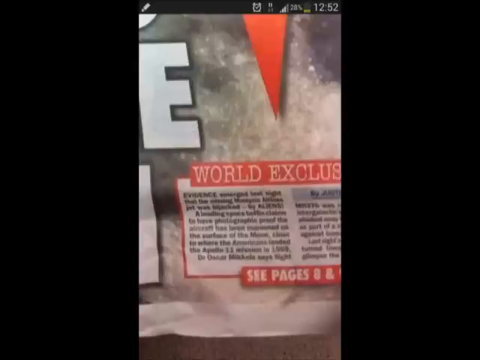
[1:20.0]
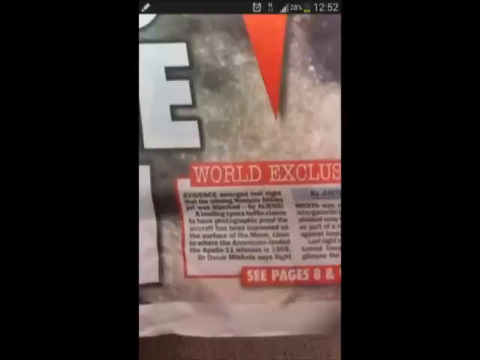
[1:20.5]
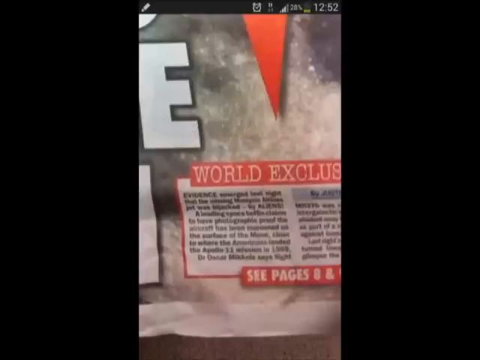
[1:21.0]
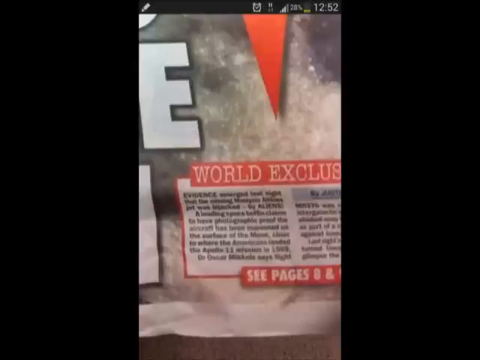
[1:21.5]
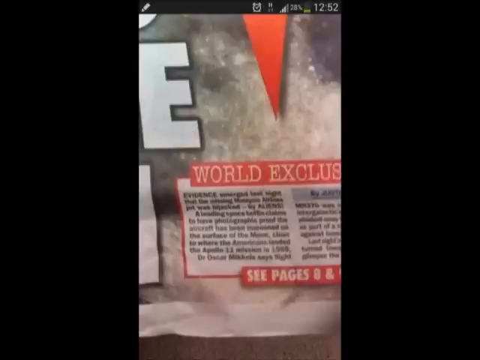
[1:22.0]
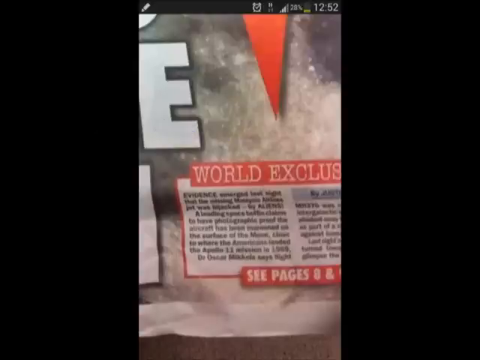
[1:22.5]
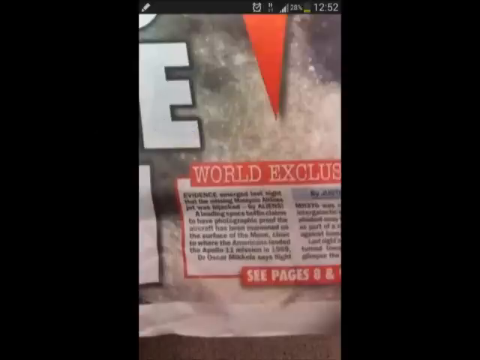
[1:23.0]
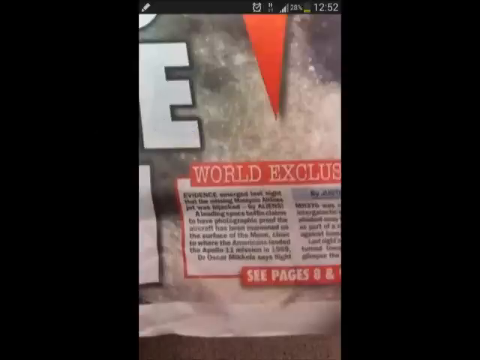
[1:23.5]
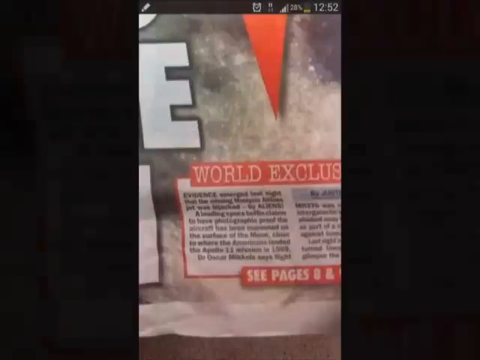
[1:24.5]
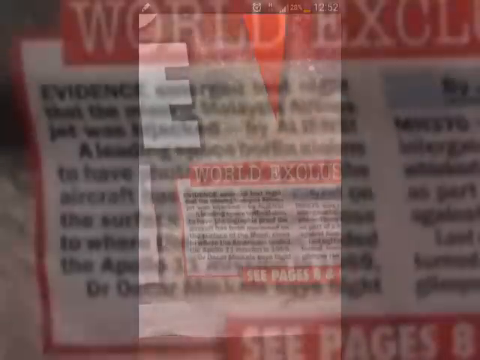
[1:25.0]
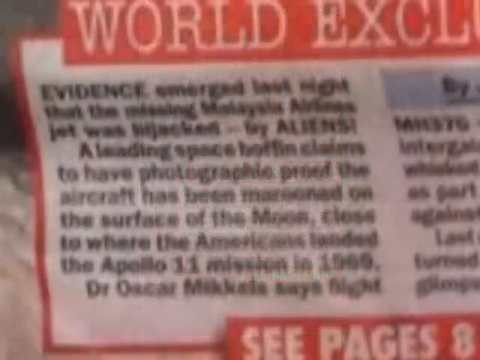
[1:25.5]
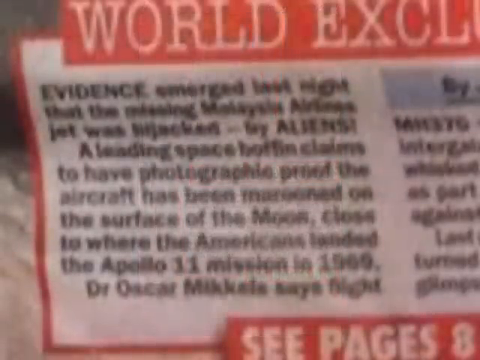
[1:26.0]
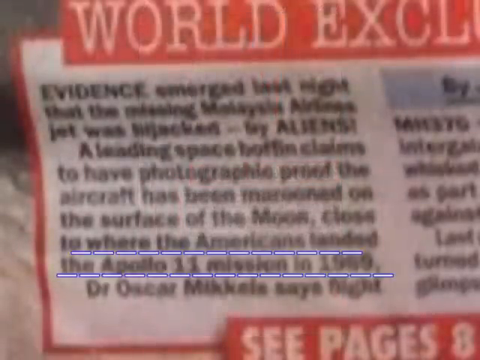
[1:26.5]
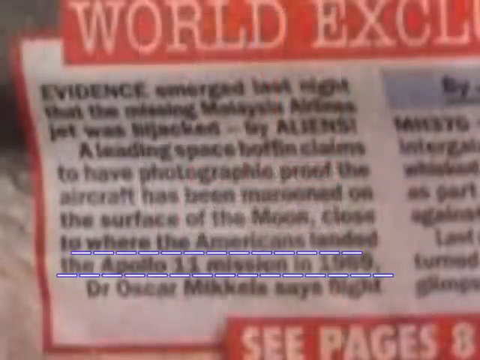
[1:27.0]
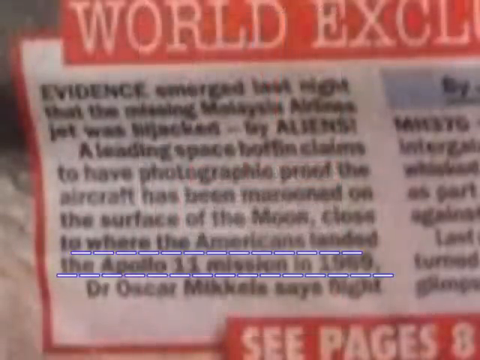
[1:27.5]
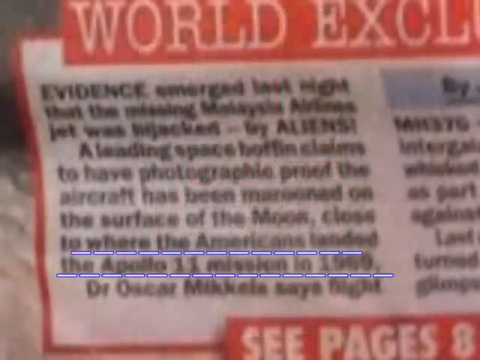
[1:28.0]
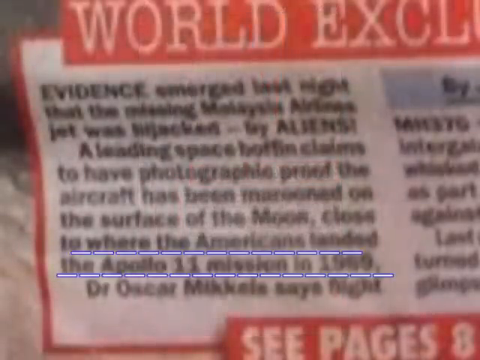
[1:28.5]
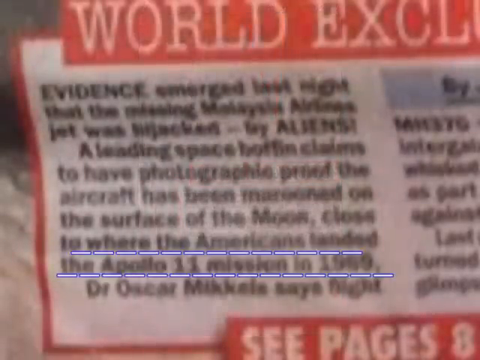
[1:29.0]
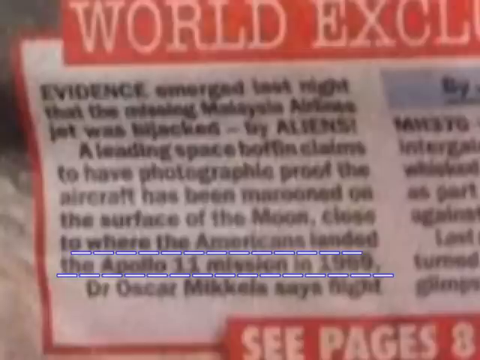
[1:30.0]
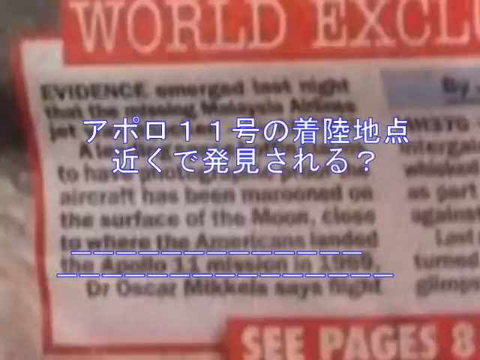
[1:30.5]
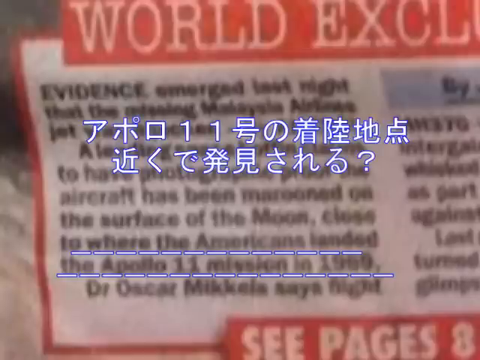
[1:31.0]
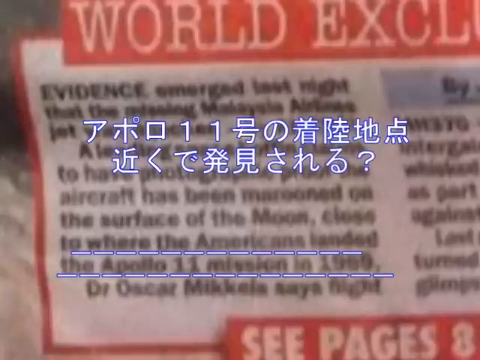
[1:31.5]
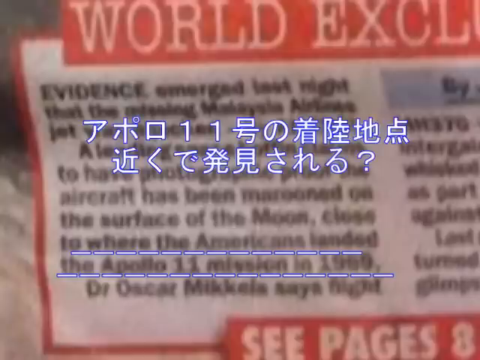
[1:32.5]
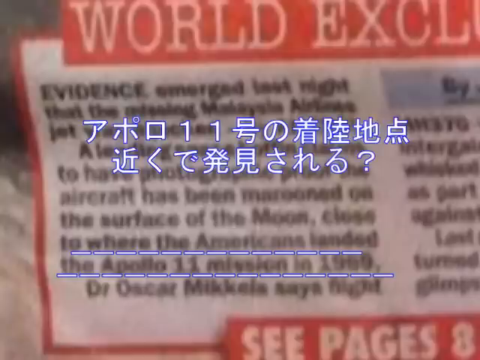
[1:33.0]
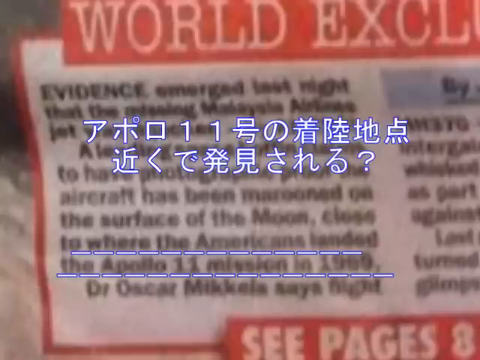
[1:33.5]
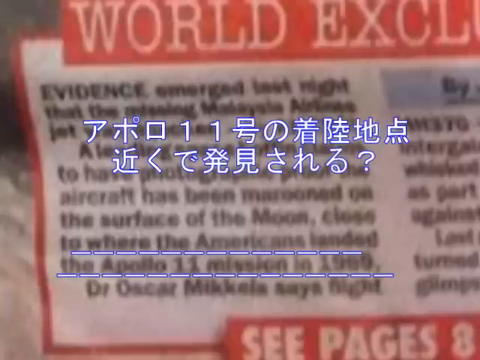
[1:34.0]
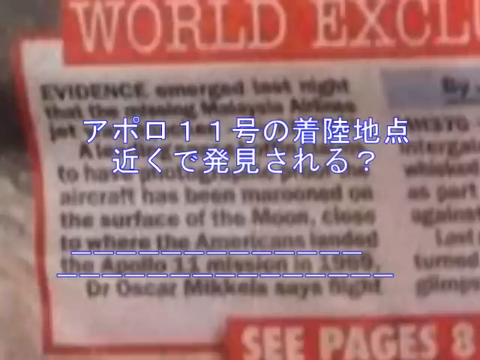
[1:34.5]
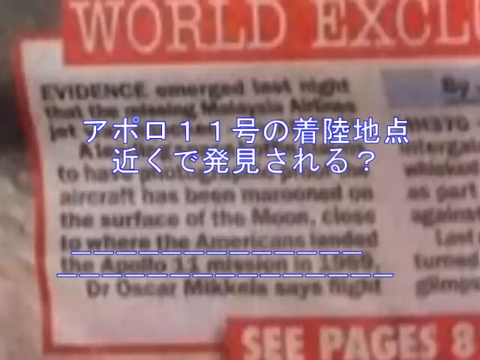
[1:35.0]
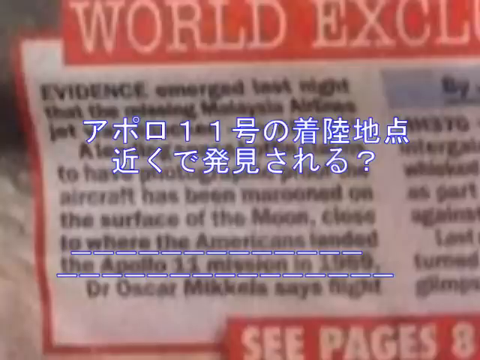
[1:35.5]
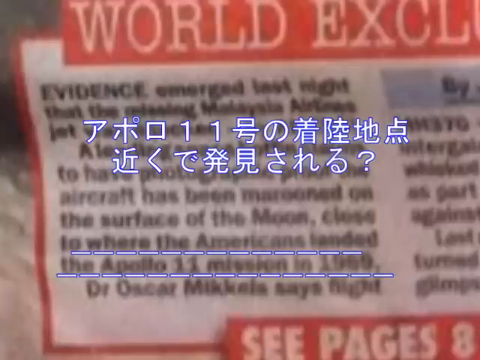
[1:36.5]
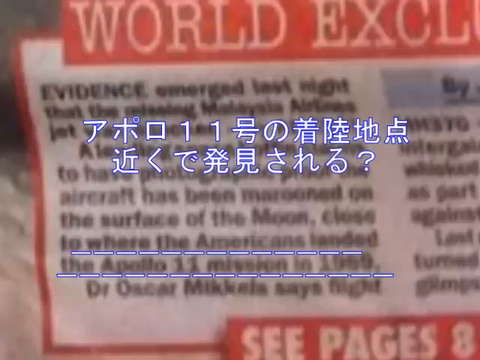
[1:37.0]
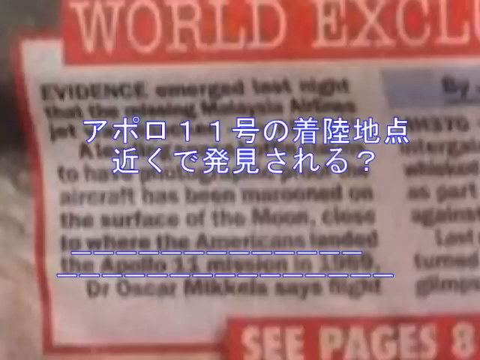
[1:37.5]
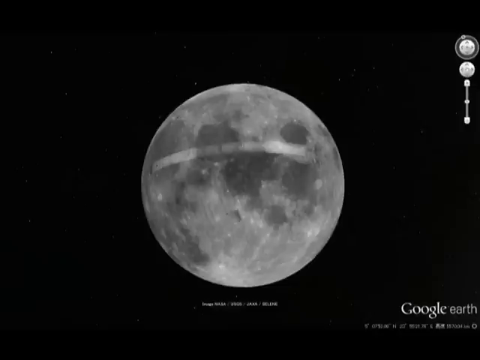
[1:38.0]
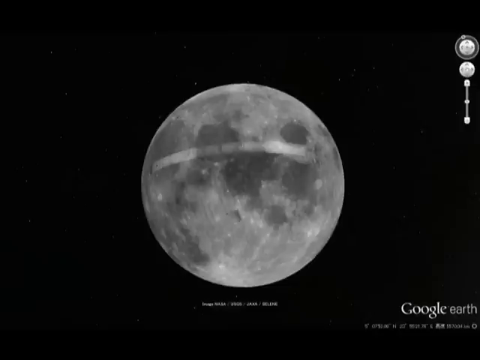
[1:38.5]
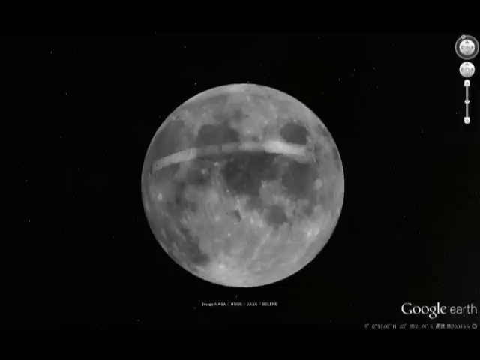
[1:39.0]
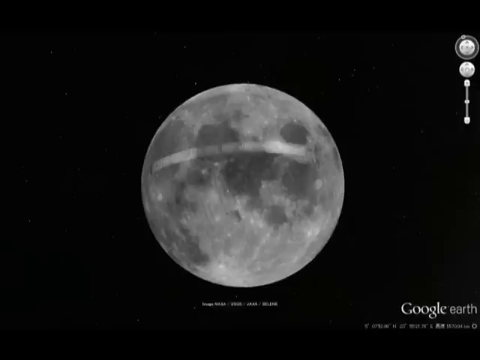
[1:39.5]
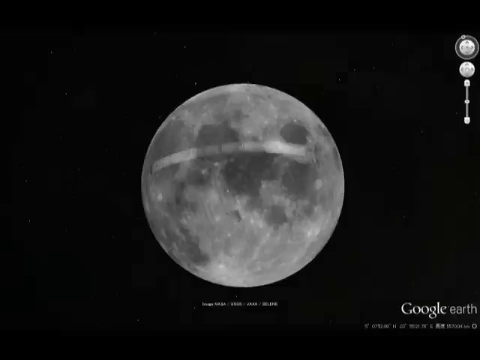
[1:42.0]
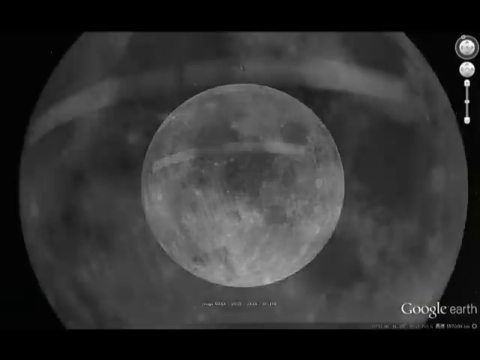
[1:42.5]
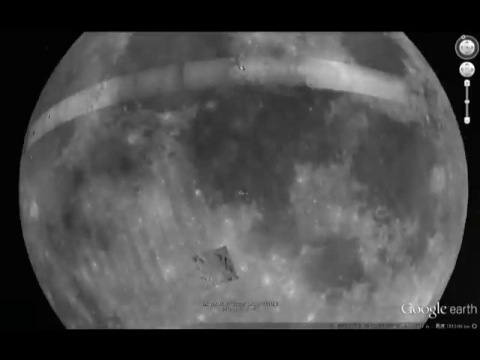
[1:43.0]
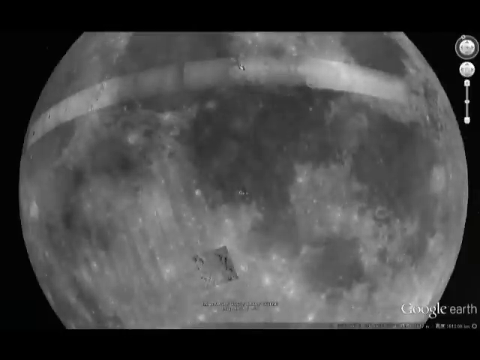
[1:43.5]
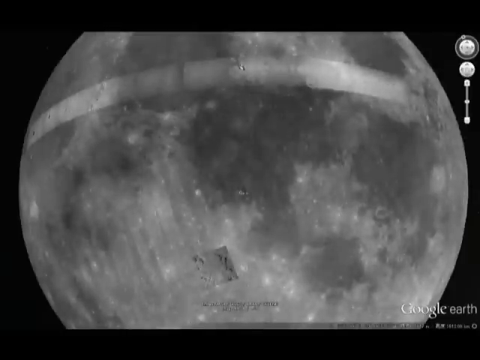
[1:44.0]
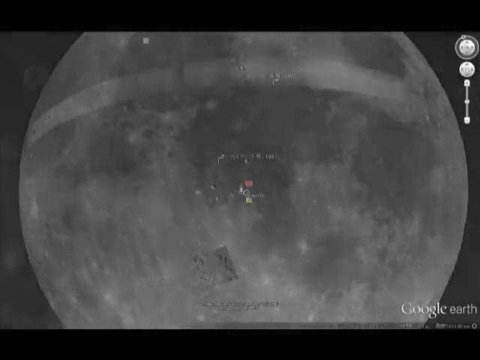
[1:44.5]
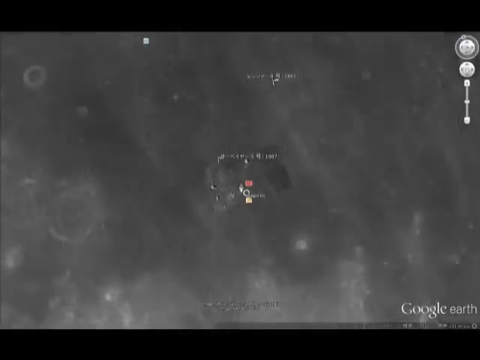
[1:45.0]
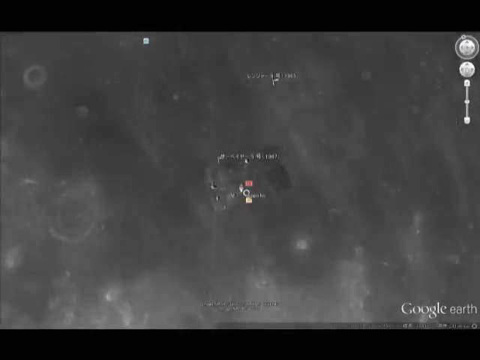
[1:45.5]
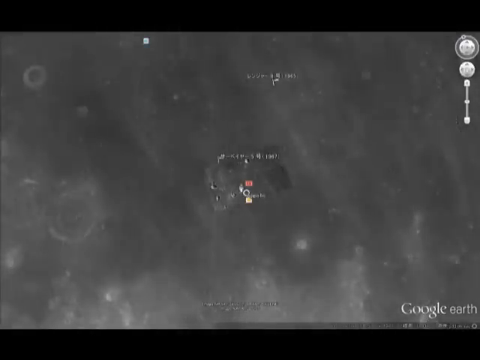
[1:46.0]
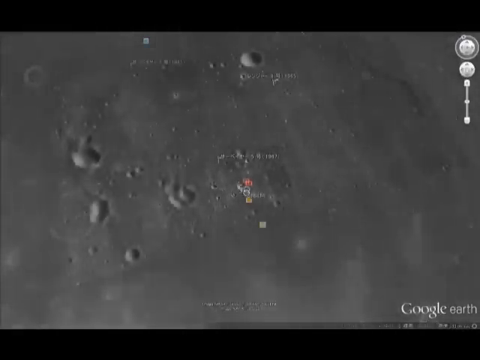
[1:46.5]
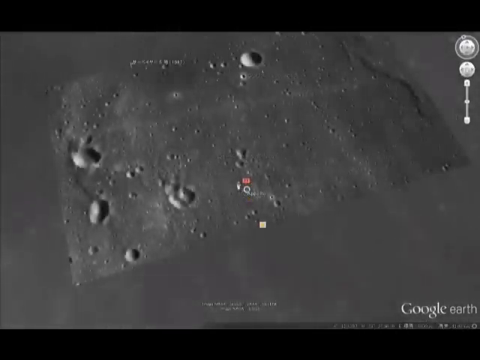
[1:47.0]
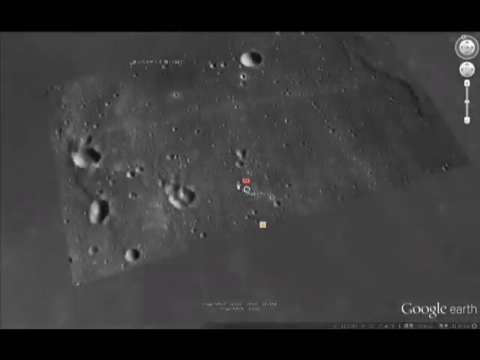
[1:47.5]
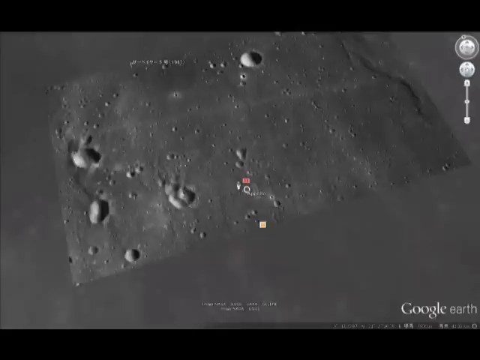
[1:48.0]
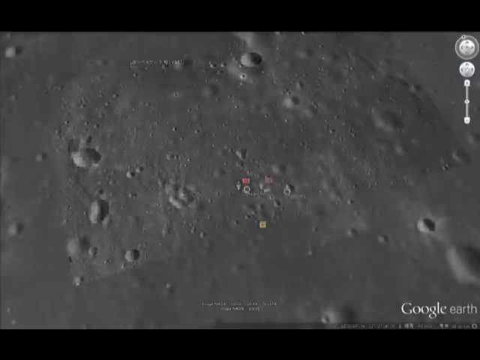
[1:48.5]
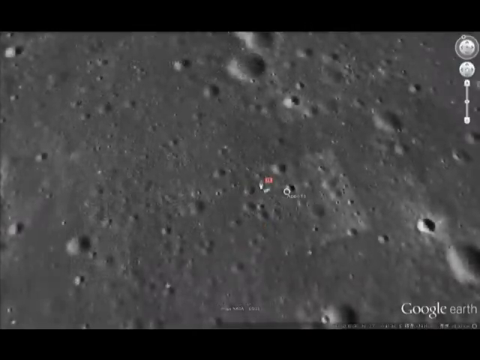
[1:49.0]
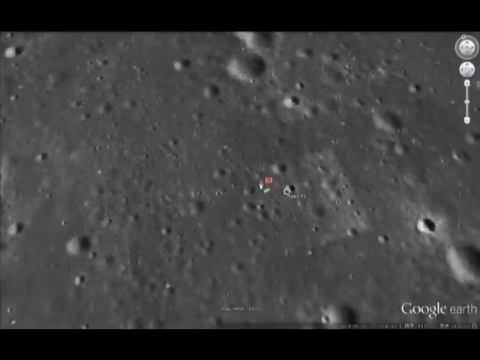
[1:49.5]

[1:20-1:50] A close image shows the "world exclusive" article. Text reads "evidence emerged," and more text refers to photograph proof of the aircraft being on the surface of the moon and to the American landing of Apollo. There are some blue lines, kind of focused on the Apollo 11 mission in 1969. Images of the moon follow, including close-ups of the moon's surface. A small excerpt says it could have been done by aliens.